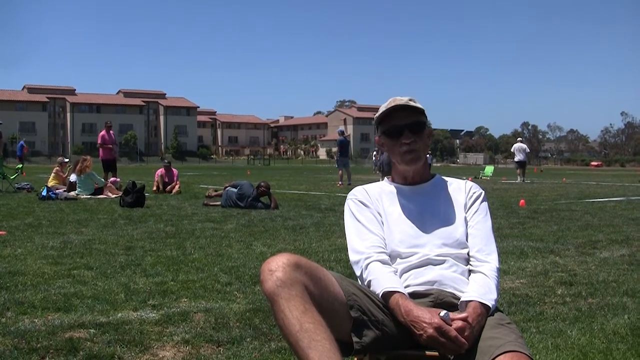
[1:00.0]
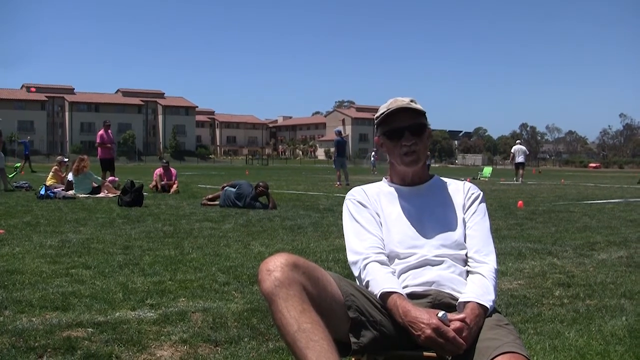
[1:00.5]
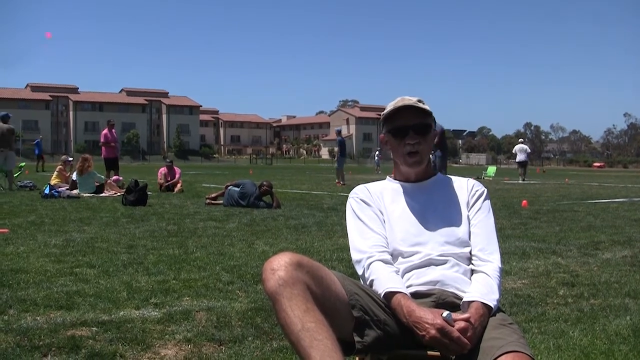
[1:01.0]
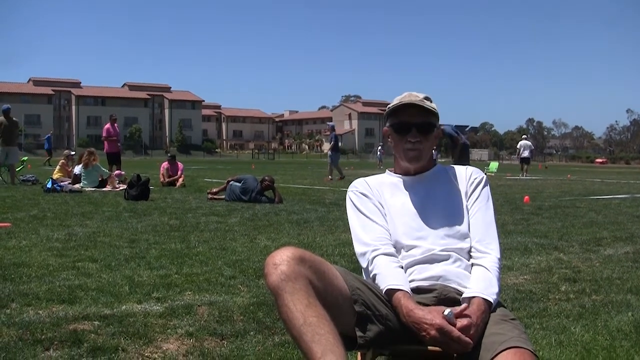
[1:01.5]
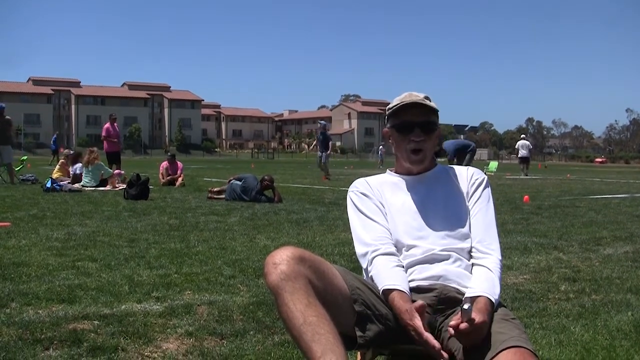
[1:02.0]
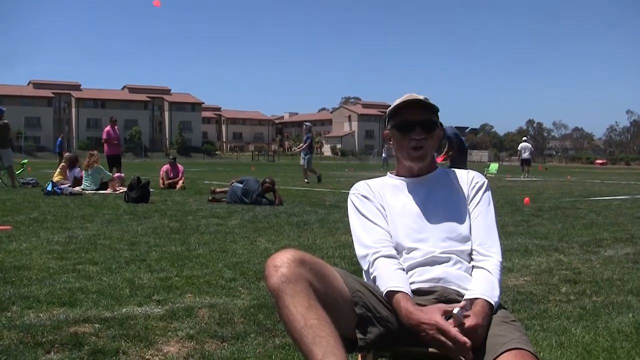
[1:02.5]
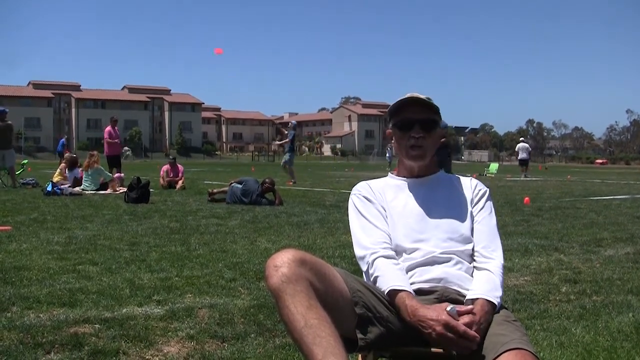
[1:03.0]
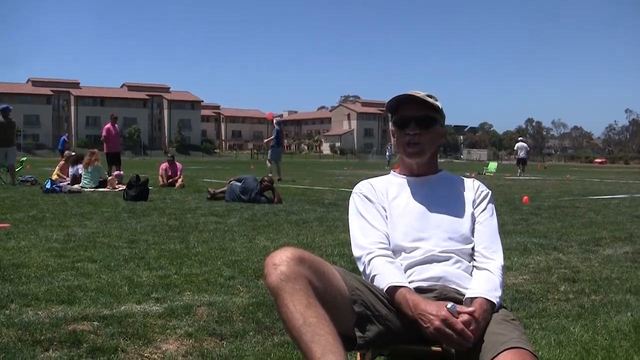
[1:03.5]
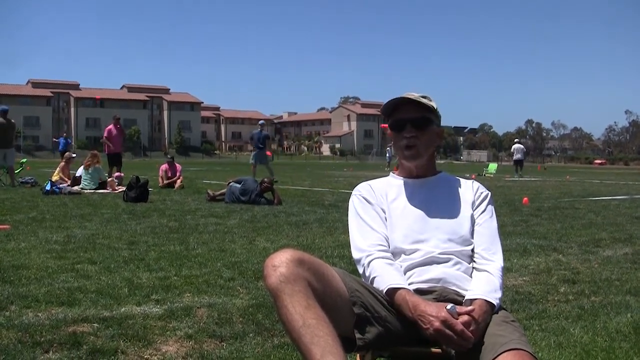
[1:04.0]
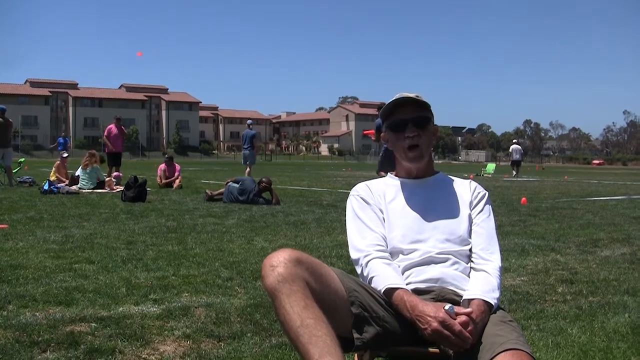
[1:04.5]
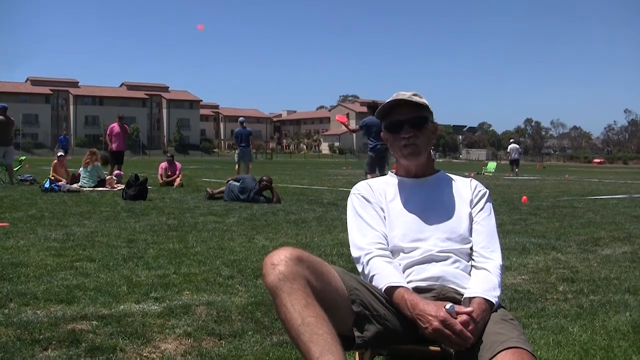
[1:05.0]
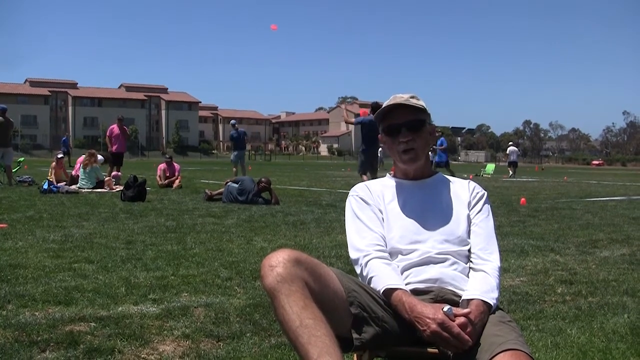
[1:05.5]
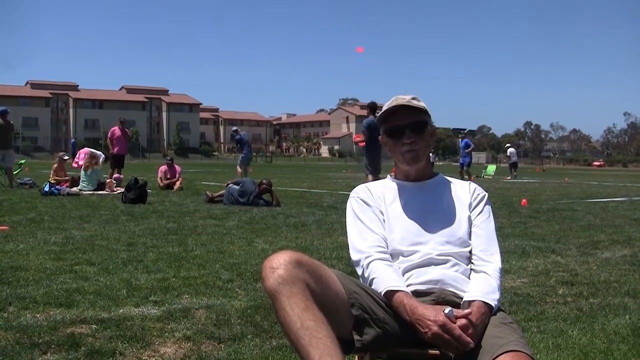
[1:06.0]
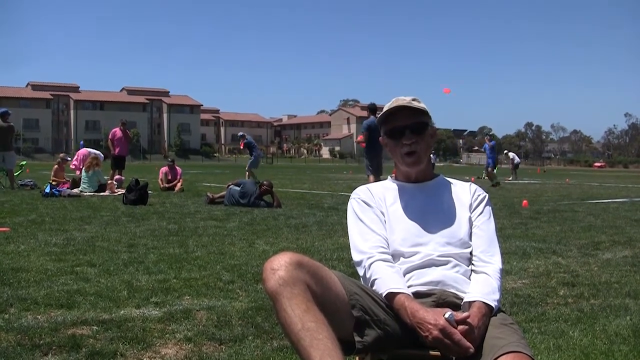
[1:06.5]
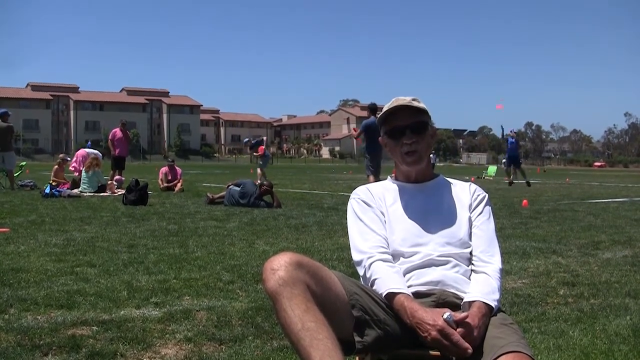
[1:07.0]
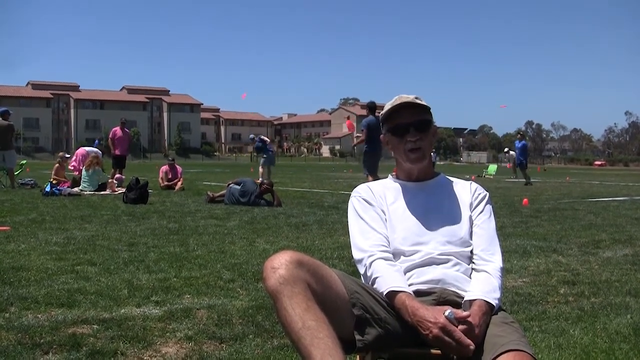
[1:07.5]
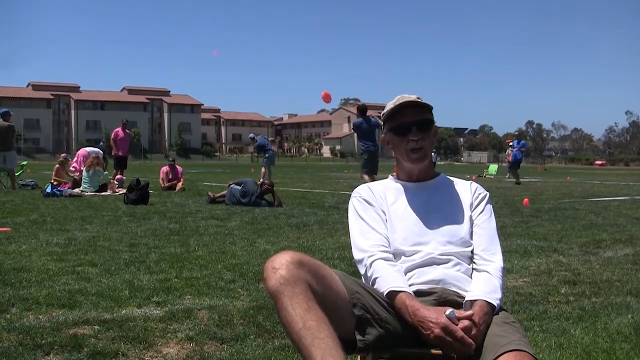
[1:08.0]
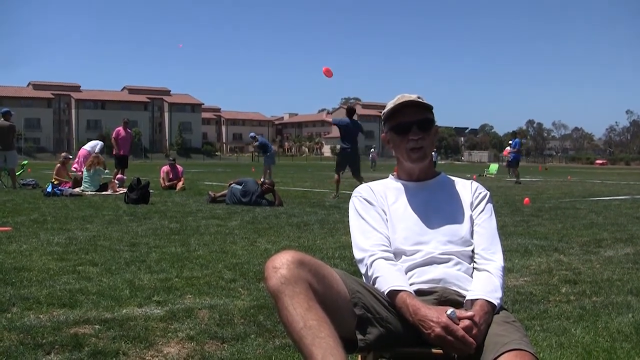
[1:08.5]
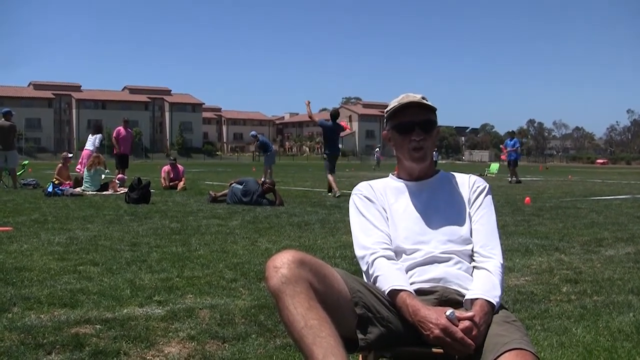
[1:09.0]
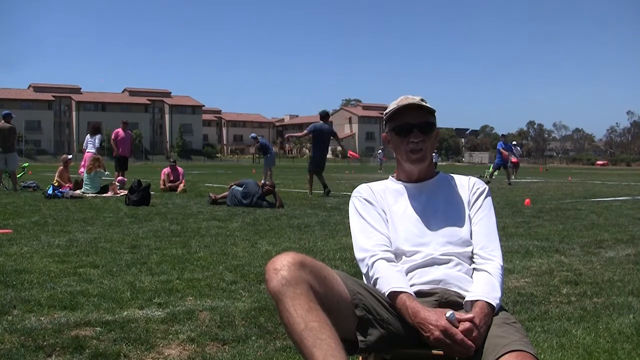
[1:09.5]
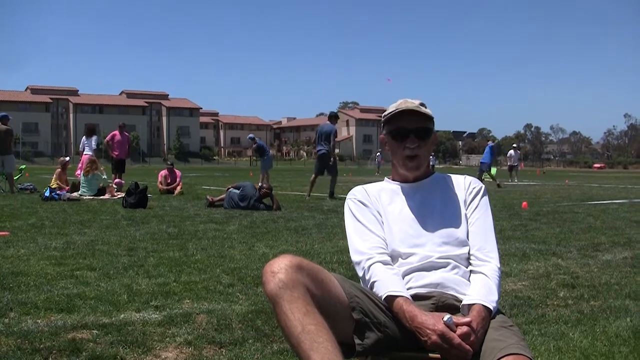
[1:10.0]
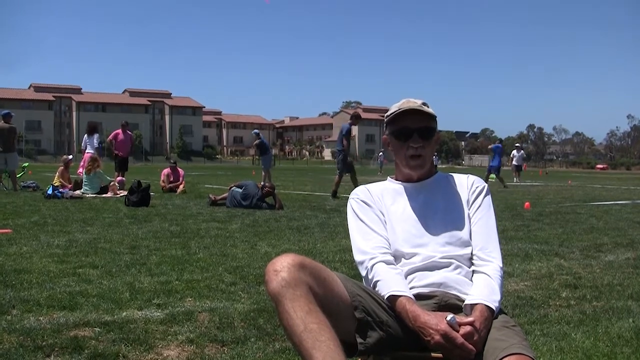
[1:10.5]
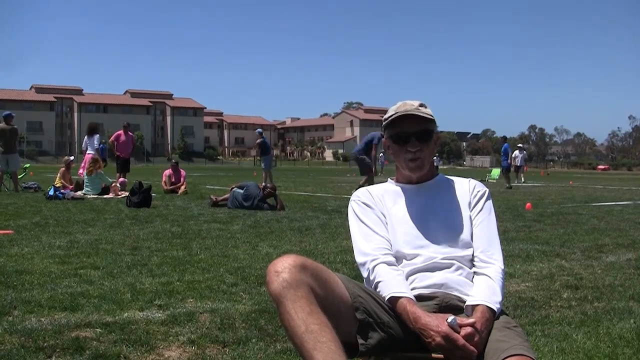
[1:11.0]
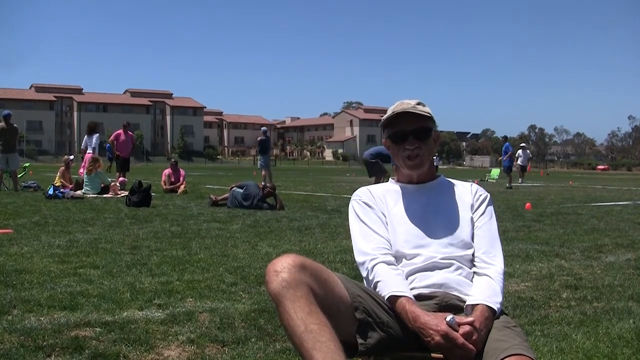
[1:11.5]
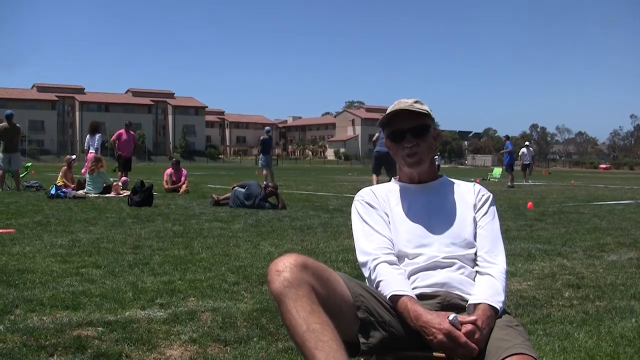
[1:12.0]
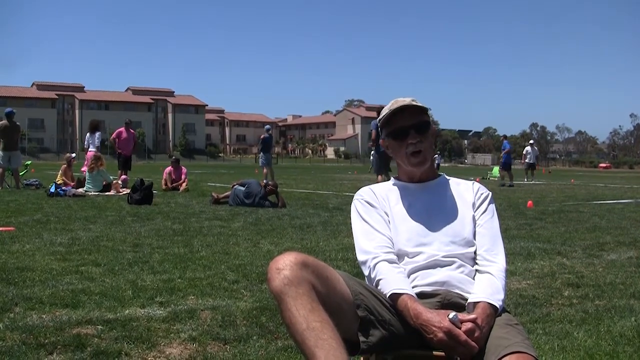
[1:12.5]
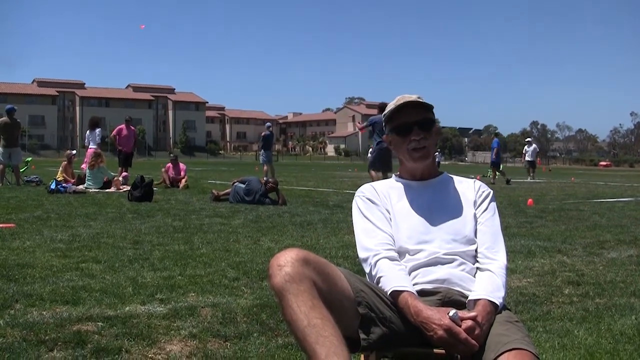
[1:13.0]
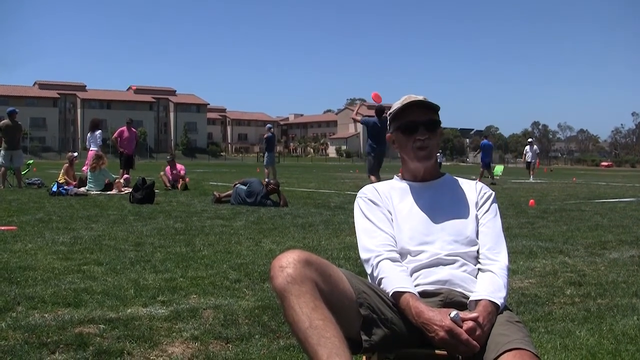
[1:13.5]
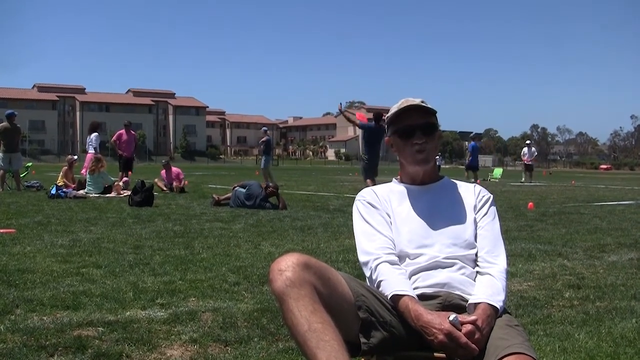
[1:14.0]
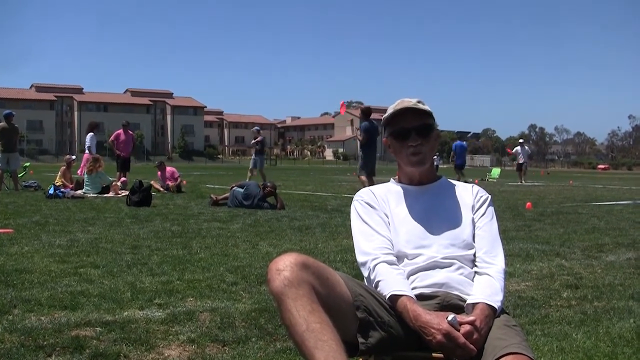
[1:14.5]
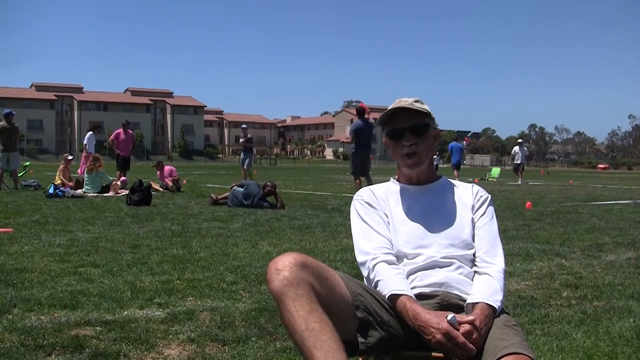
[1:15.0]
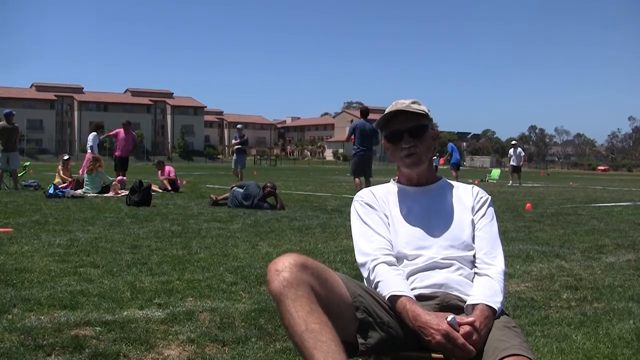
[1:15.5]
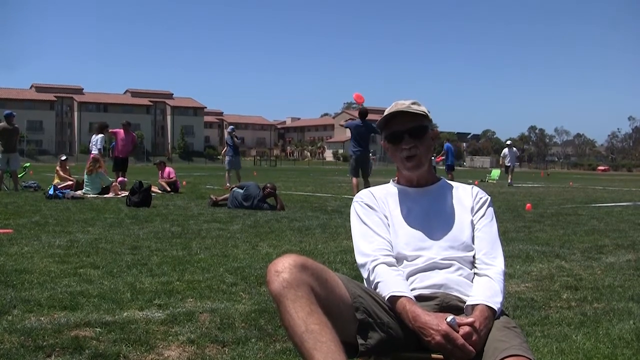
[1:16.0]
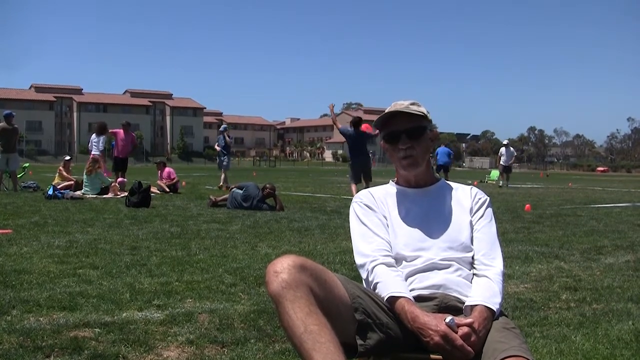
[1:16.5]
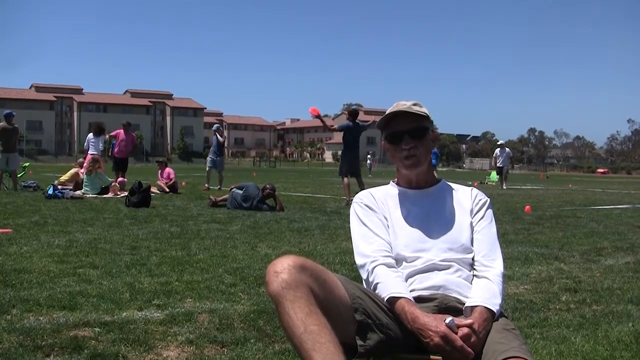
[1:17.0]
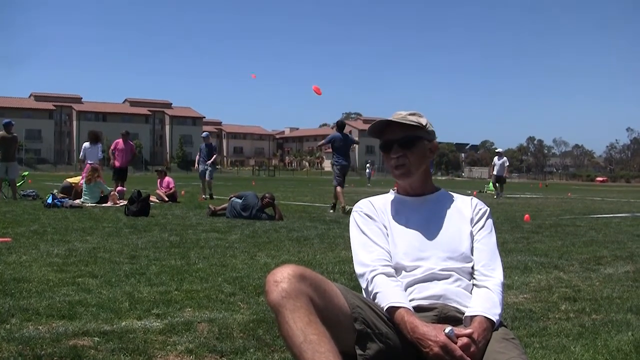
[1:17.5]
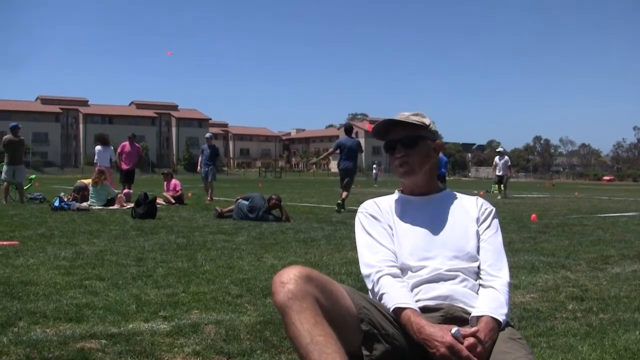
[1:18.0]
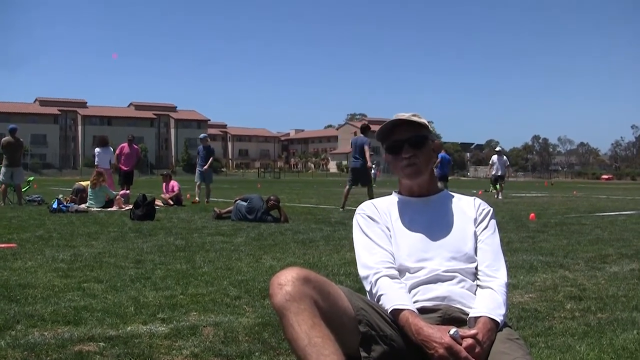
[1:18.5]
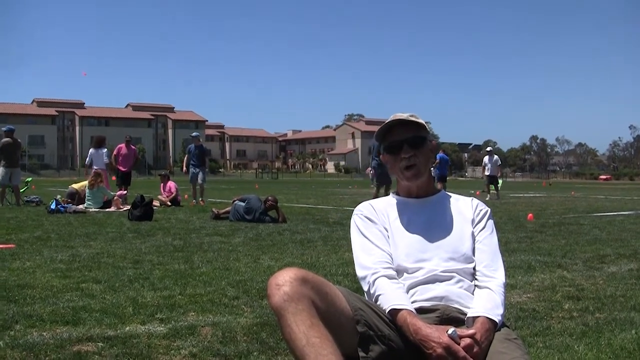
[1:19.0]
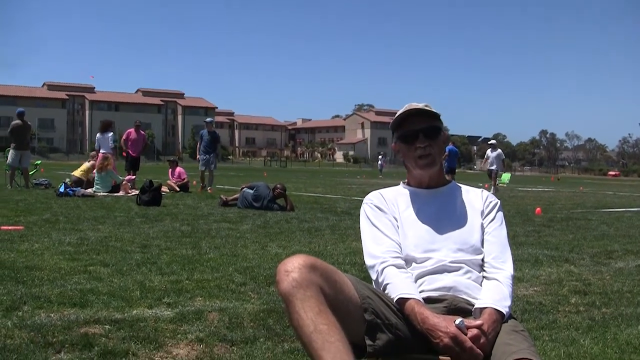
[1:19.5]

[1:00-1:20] Tom Kennedy is still responding to the interview question, now holding his microphone between both his left and right hands. He gestures with his shoulders coming up, perhaps a gesture that he is not sure, though he still seems relaxed in his pose and response; his shoulders go up multiple times, though he seems not overly concerned rather than not knowing. Behind him, people are still tossing Frisbees back and forth, and all the Frisbees look to be hot pink or fluorescent pink. The field is marked off into rectangular areas, with orange markers or very short cones at the corners of the rectangles. A man in dark shorts, a white shirt and a white cap seems to be walking back and forth across the field, perhaps one of the people coordinating the event. About half the people, who look to be mostly late-teen or young adult males, are out on the field running around and tossing the Frisbee, while the others in the group seem relaxed and talking.